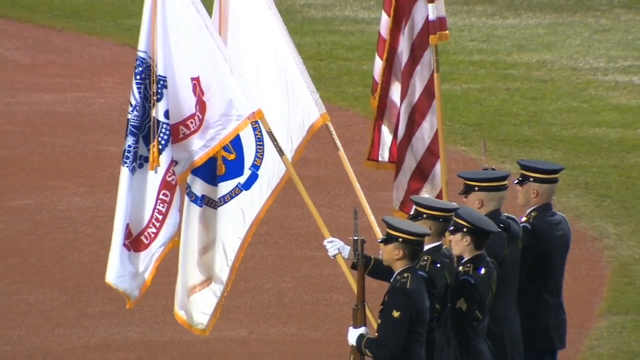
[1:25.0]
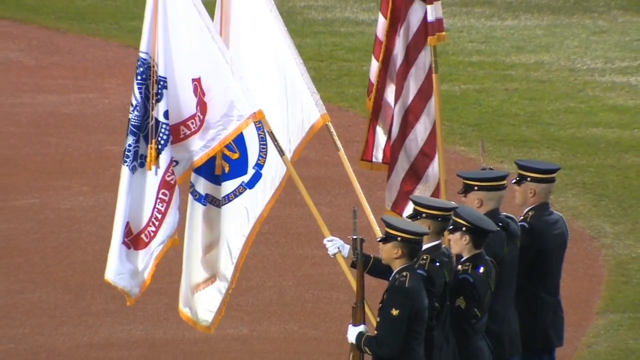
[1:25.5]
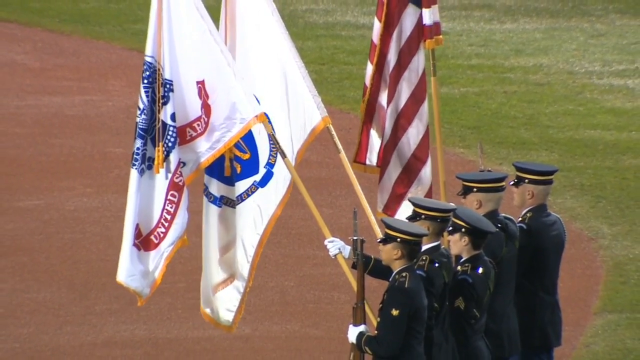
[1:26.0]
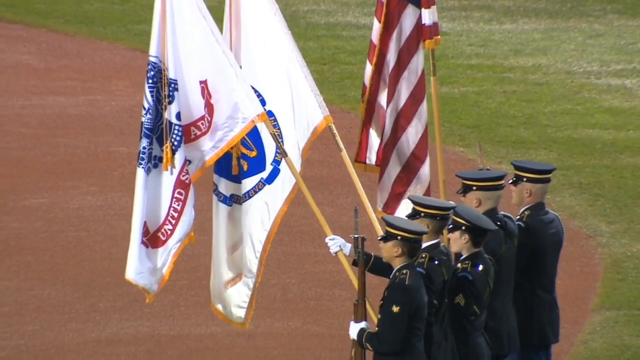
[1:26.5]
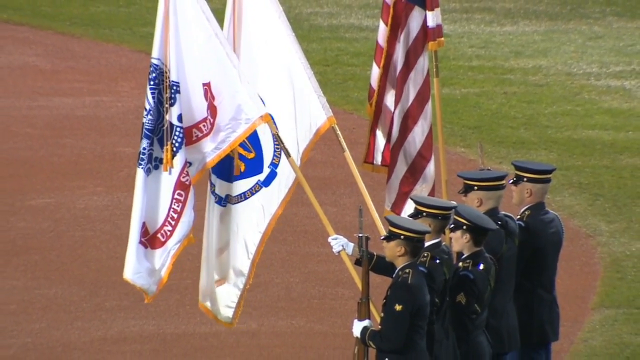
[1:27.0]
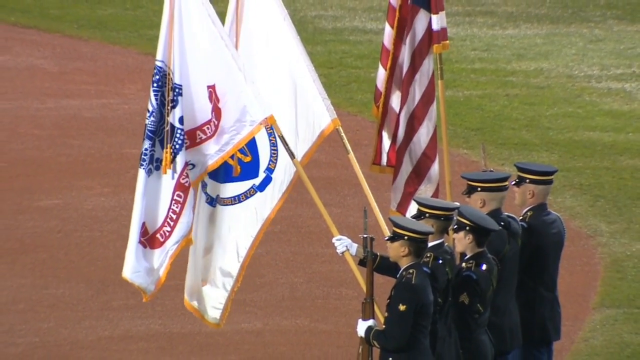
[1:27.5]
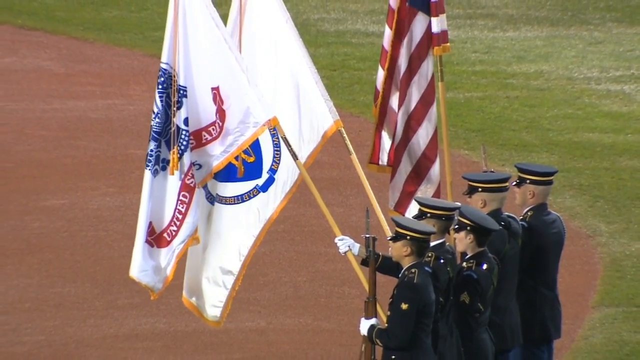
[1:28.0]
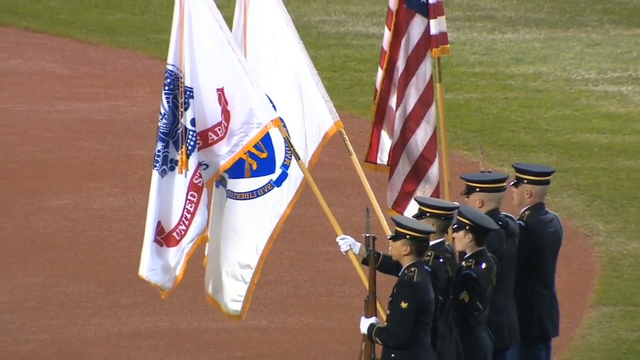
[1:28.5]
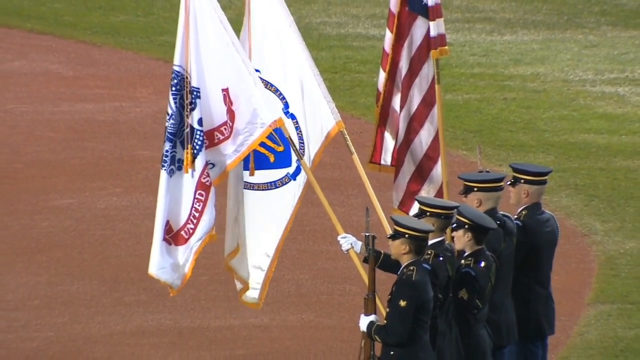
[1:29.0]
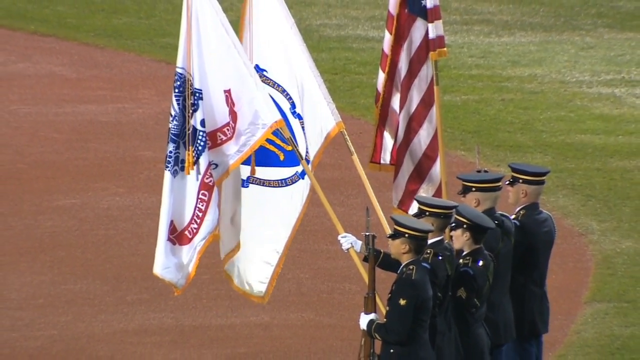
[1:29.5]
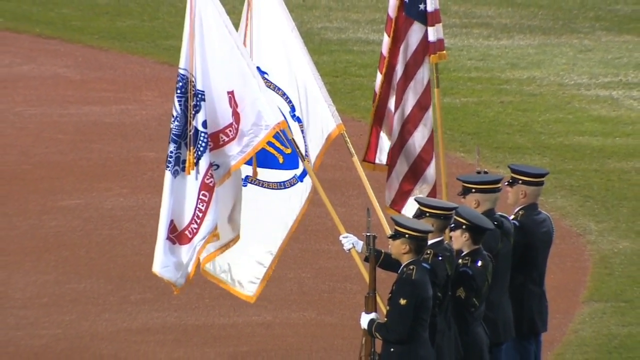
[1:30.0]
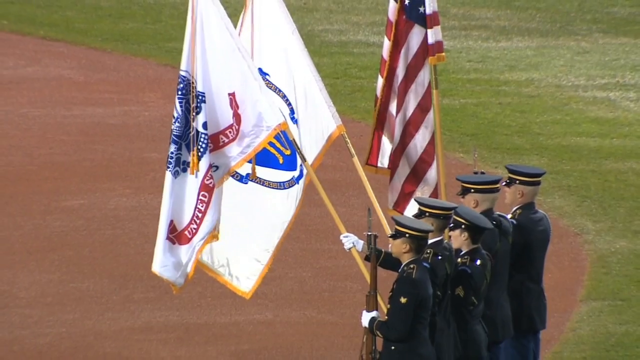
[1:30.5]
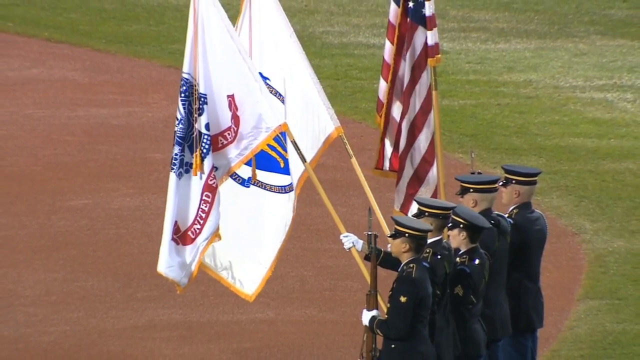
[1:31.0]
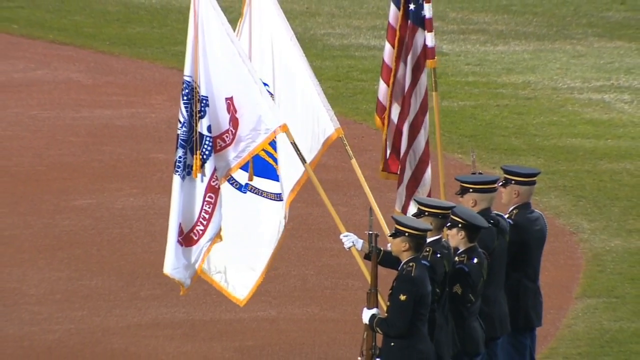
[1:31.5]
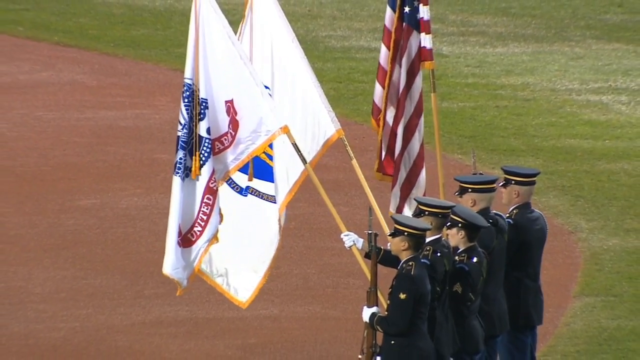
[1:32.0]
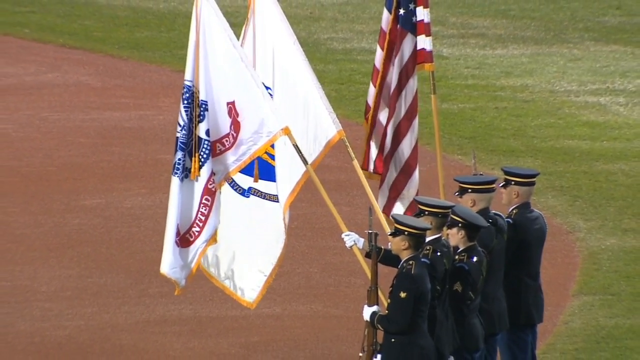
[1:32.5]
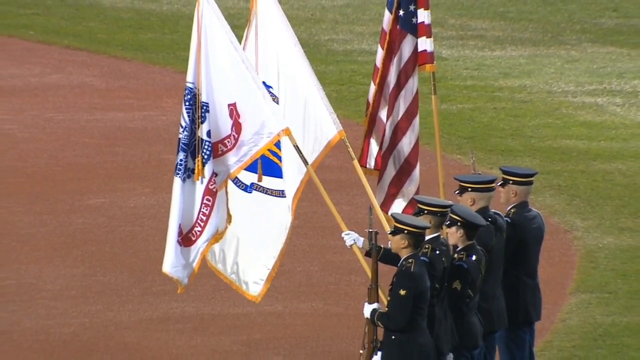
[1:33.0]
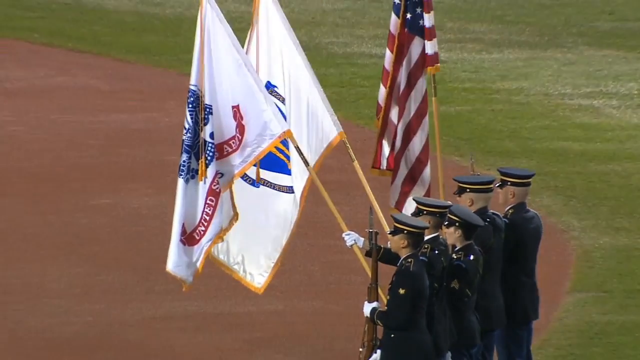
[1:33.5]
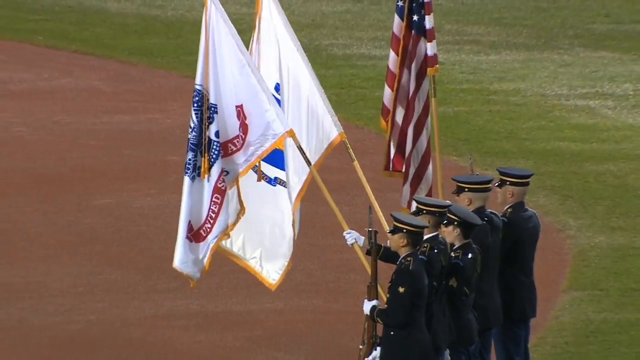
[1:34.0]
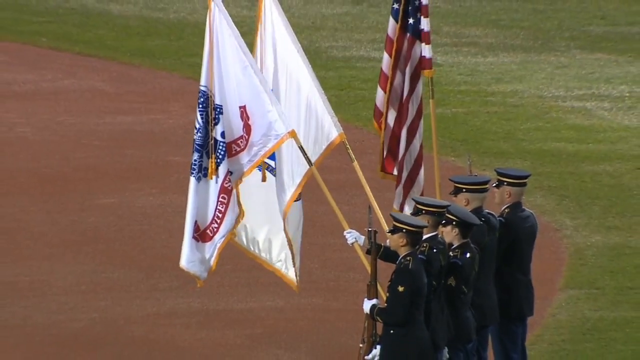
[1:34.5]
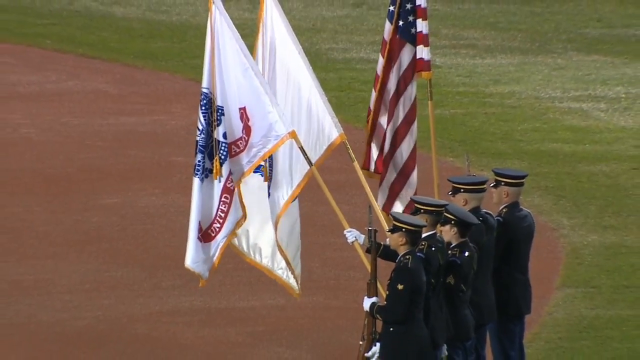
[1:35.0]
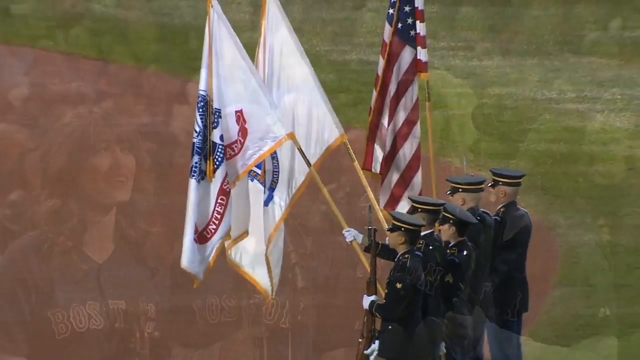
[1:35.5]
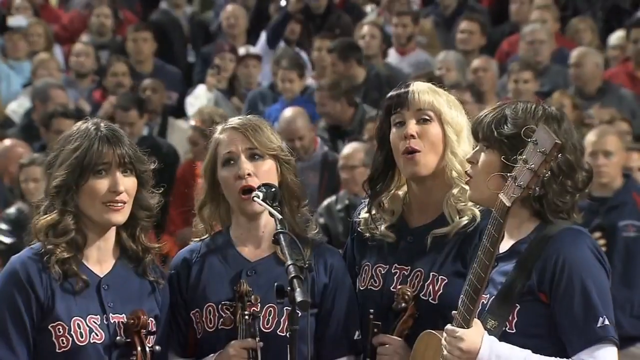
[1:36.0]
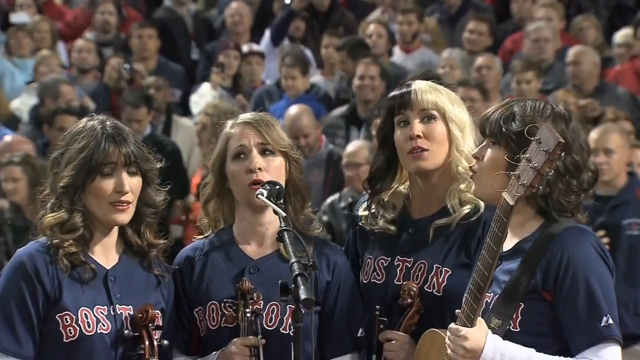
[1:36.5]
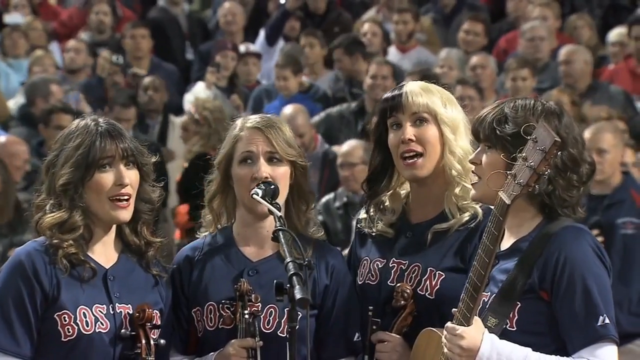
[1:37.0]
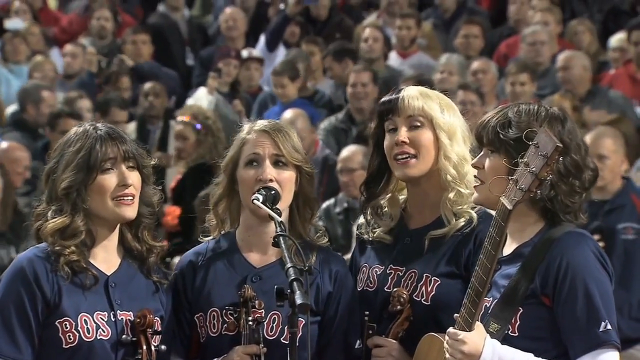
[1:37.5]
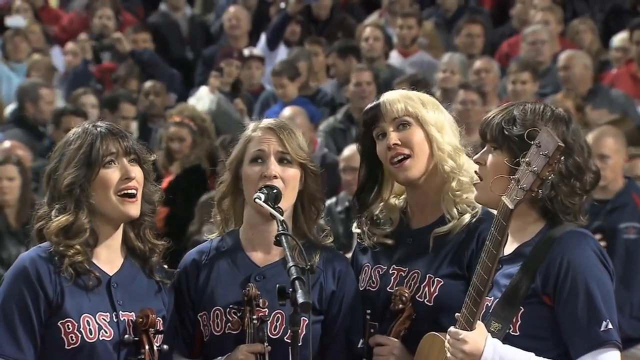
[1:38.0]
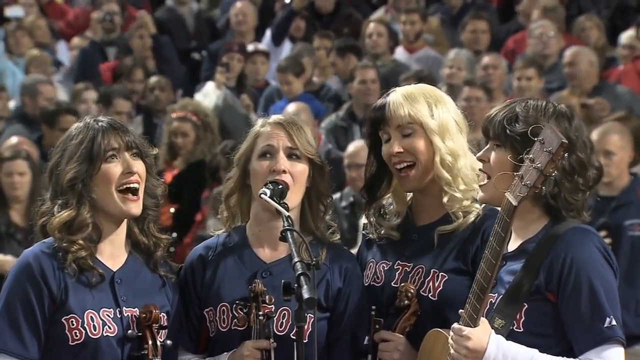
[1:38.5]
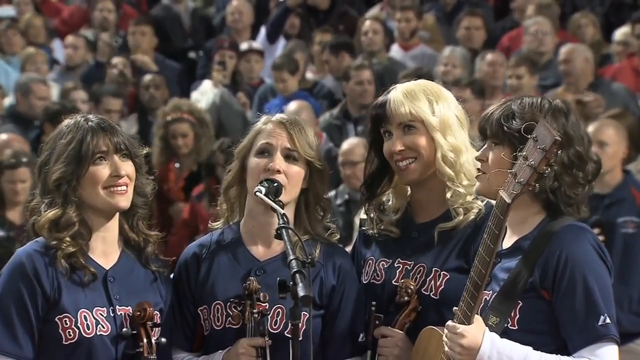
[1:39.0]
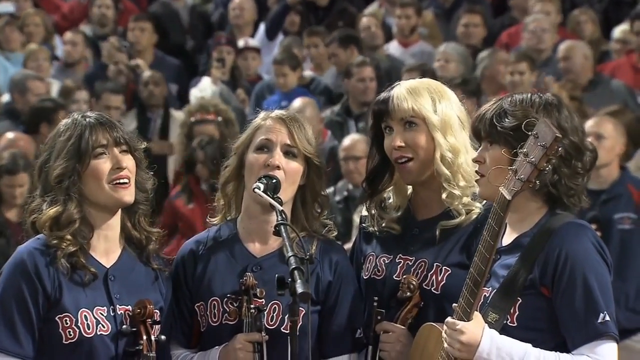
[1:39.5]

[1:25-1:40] The color guard holds its three flags on poles: two white and one American flag. The members wear police-style hats, black suits, and white gloves, at least those holding the flags, and they still carry their guns. The camera stays on them and zooms out a little, with the brown dirt of the field and the green of the outfield in the background at Fenway Park. It then pans to four women singing, apparently a choir. Only the tops of their instruments are visible. One woman is definitely holding a guitar; the other three may also be holding guitars, but the tops look like those of a cello, so it is unclear.